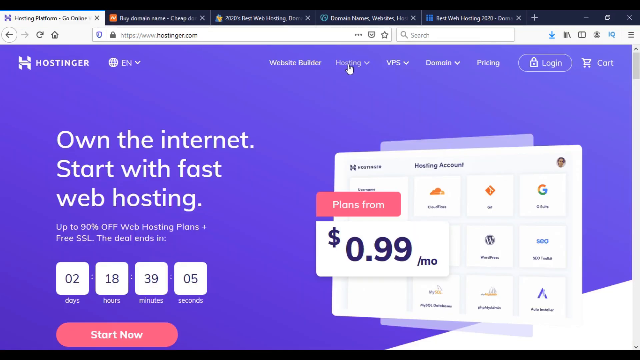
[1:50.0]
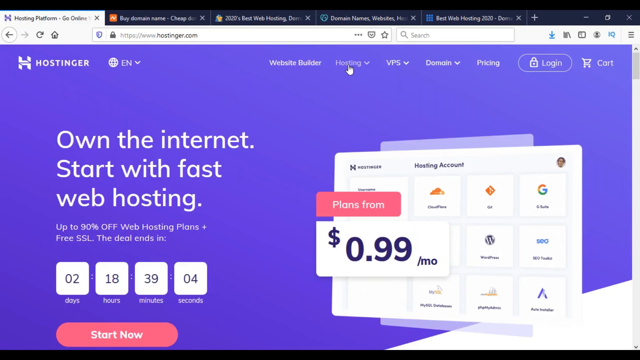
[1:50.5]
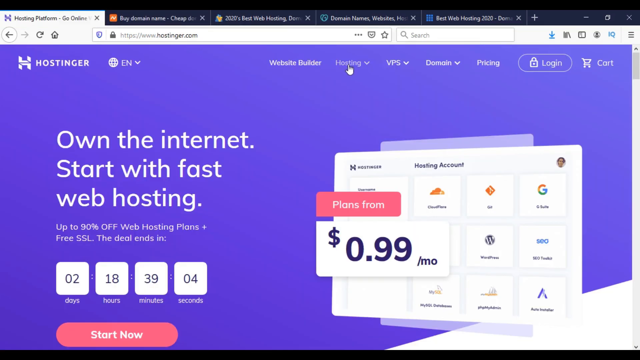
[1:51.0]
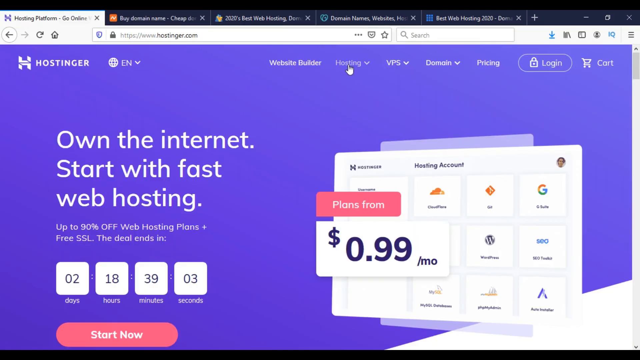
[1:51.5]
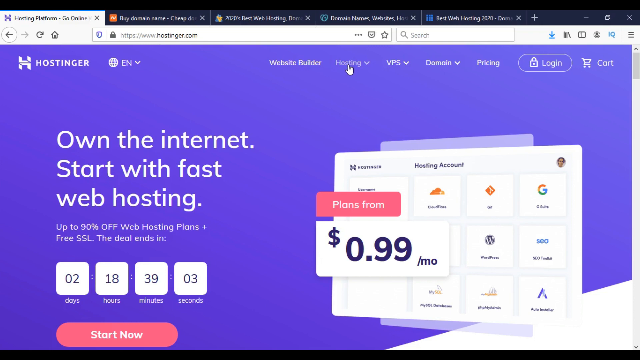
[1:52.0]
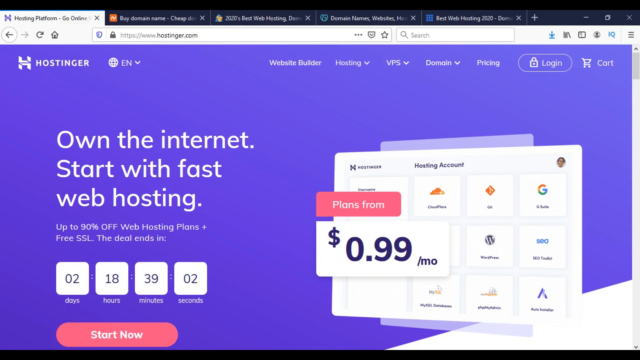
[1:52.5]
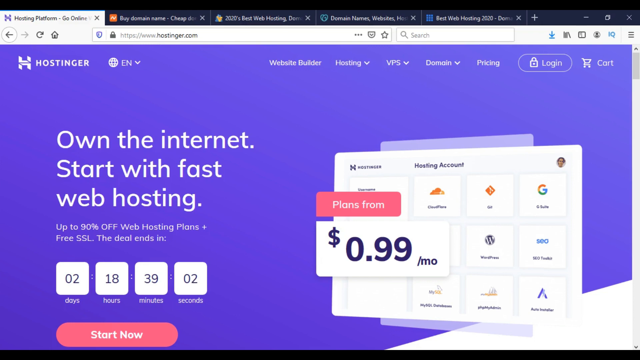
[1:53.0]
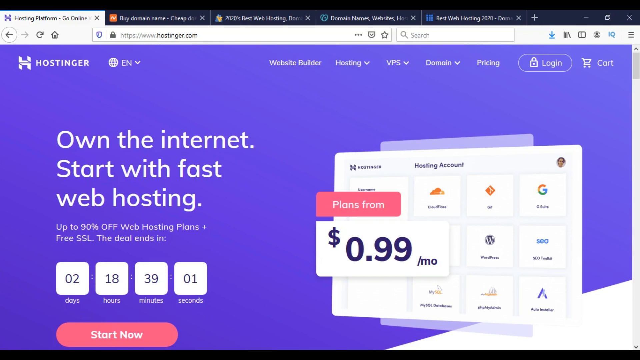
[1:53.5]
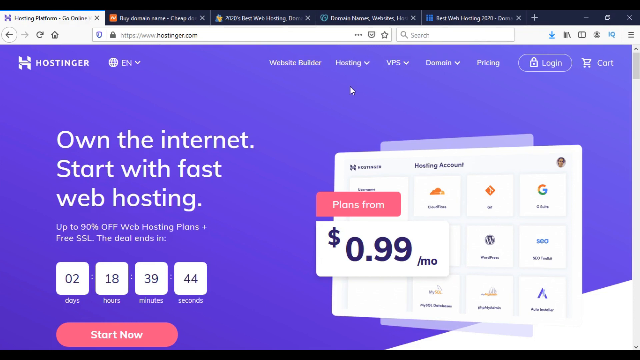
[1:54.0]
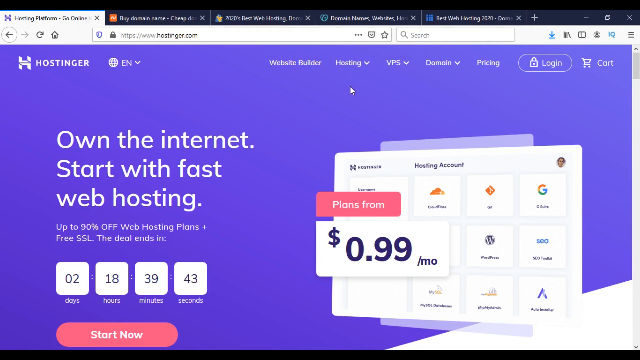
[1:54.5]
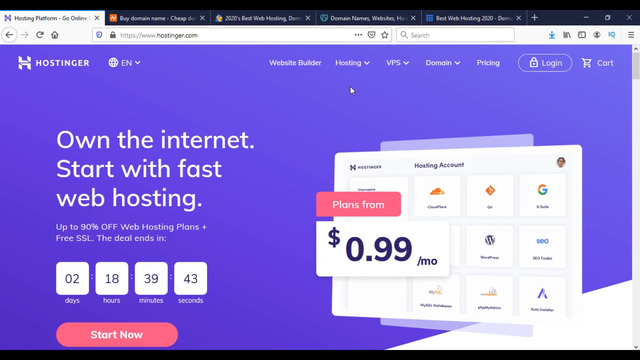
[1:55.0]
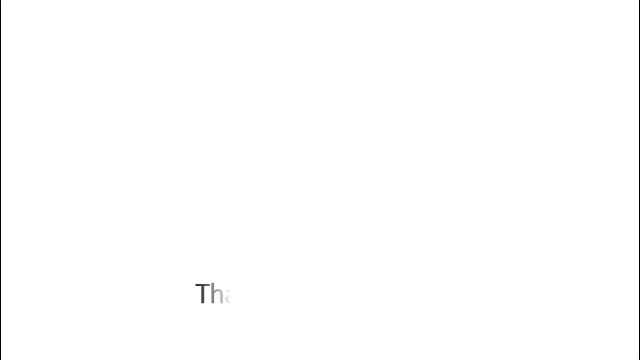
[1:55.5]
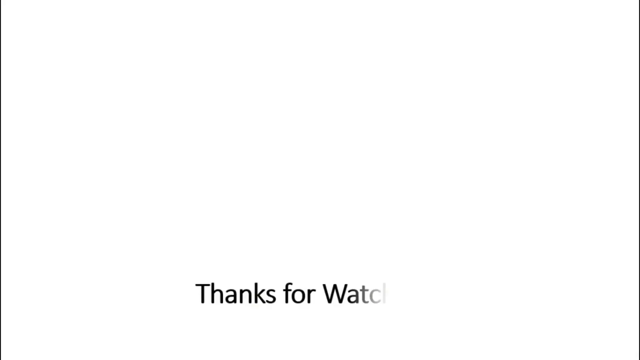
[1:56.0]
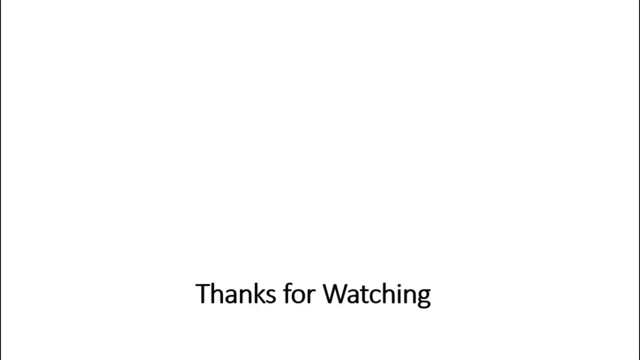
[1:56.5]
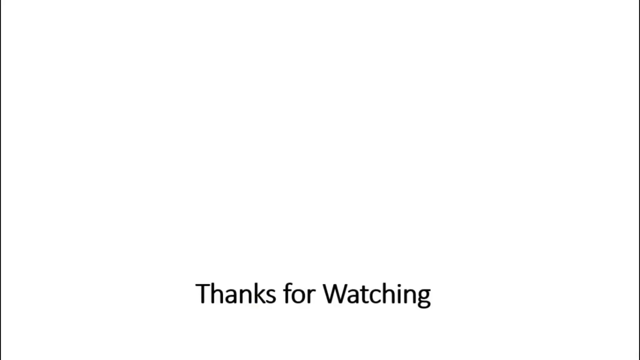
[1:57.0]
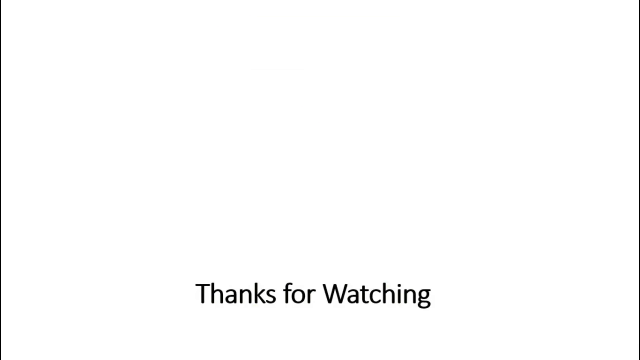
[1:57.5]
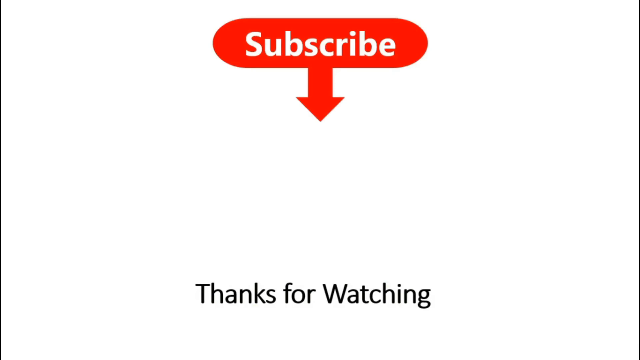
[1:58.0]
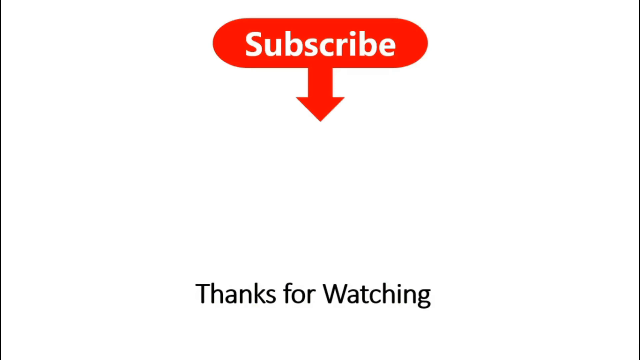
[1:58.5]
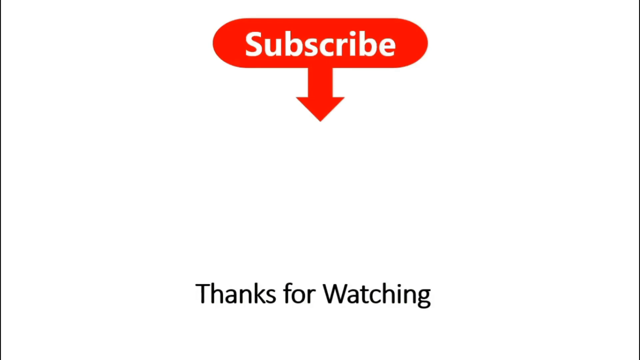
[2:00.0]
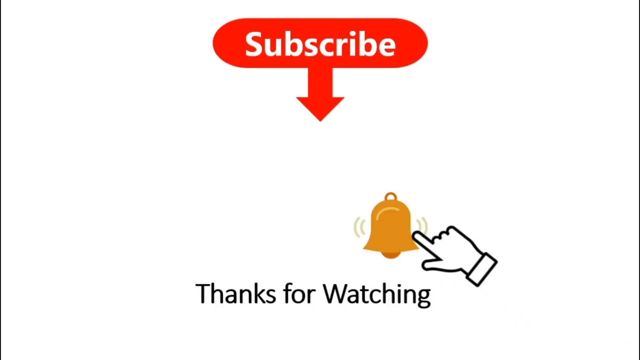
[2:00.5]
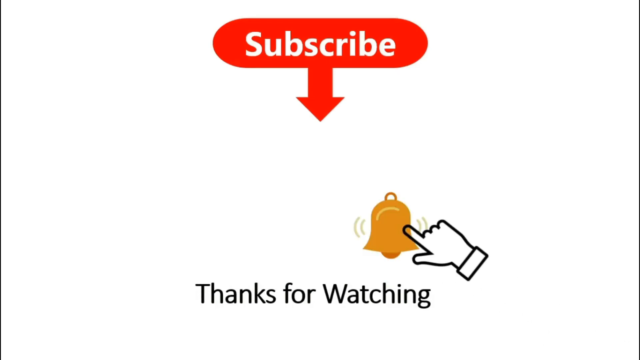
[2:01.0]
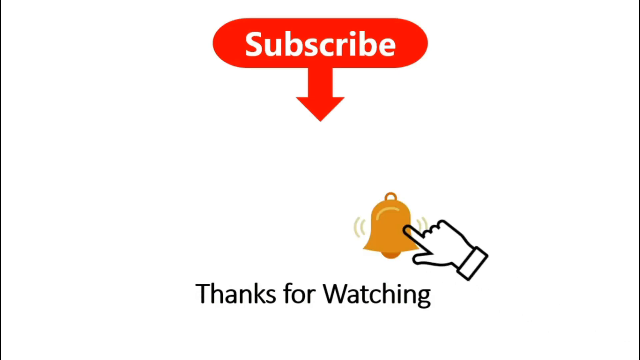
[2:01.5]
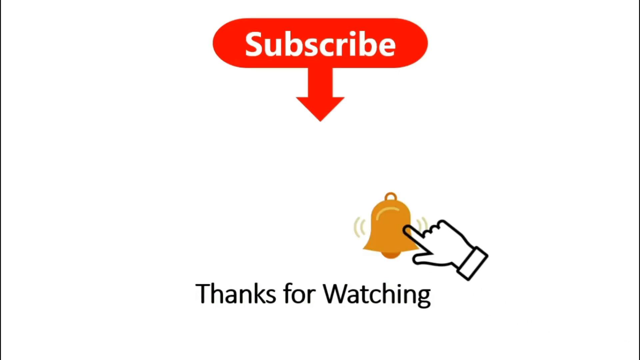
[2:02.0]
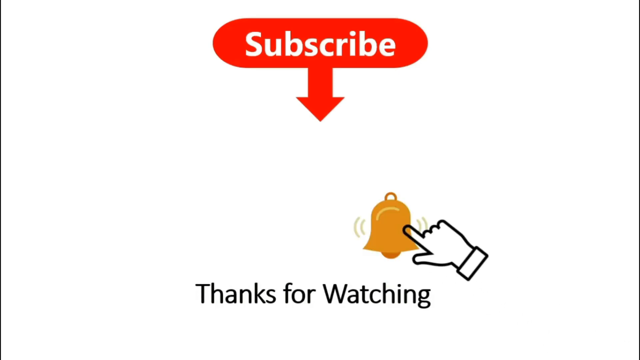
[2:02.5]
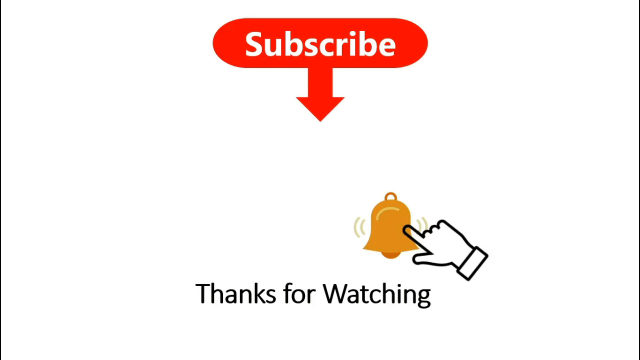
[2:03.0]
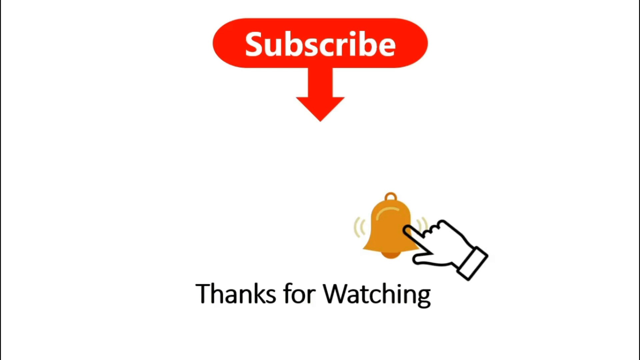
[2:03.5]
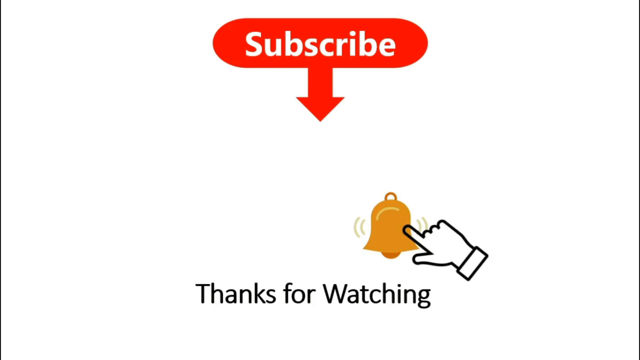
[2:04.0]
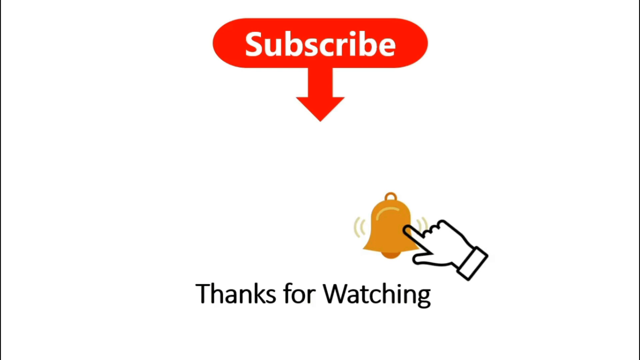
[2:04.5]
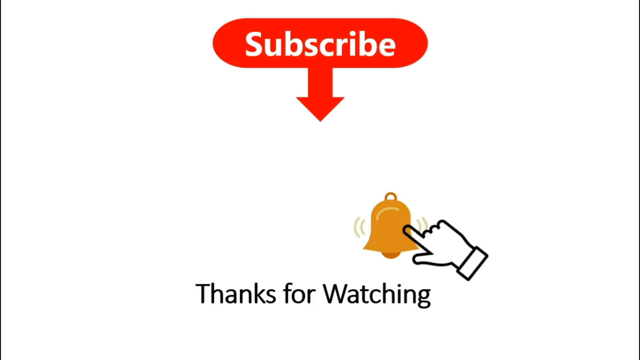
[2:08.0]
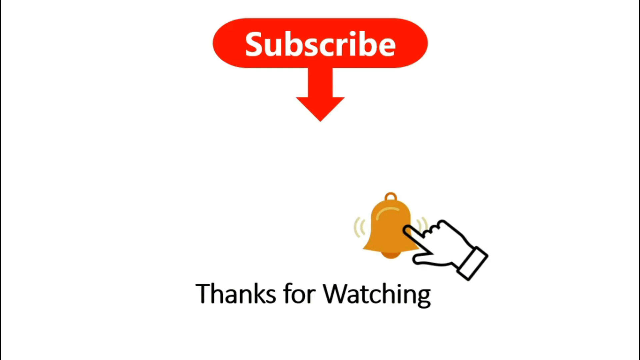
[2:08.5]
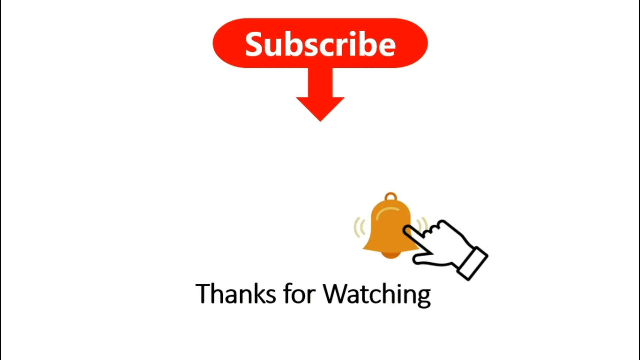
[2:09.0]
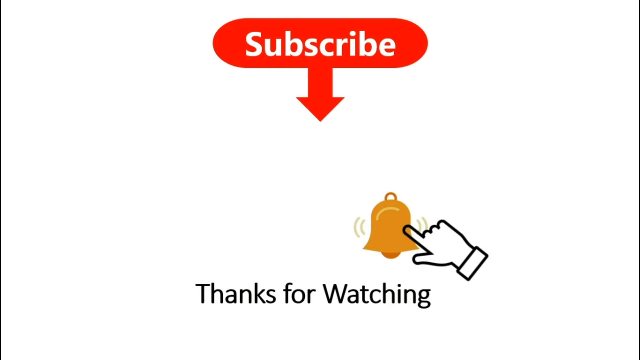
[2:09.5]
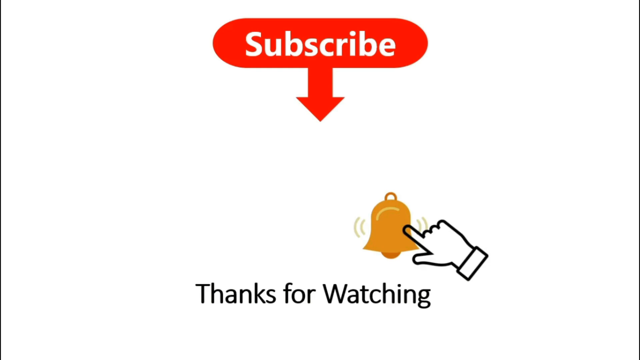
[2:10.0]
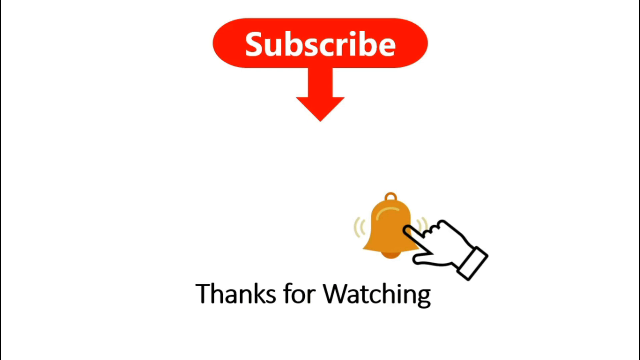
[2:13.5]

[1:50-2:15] A solid purple page shows Hostinger at the top, along with a login and a cart. The main text says "on the internet start with fast web hosting" and "plans start at 99 cents a month." The video then moves to a thanks-for-watching and subscribe screen: a little red bubble comes out with an arrow pointing down and says "subscribe," and at the very bottom is "thanks for watching." A gold bell comes sliding out and a little hand pushes the bell. The video stays on this screen for a while.